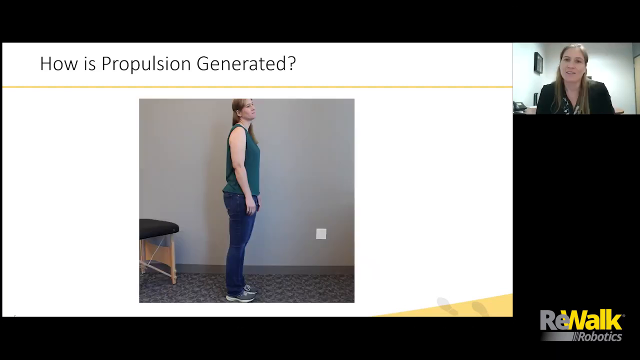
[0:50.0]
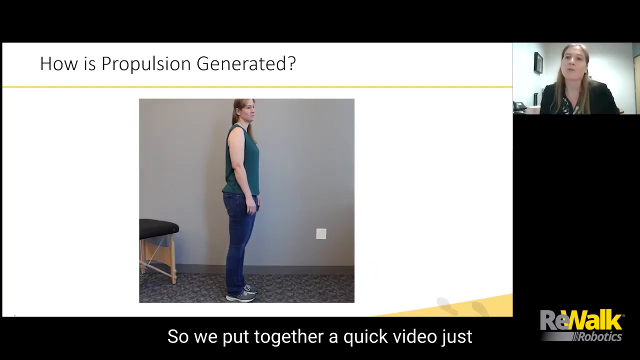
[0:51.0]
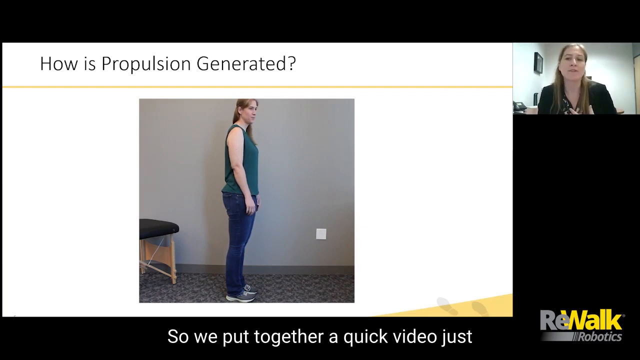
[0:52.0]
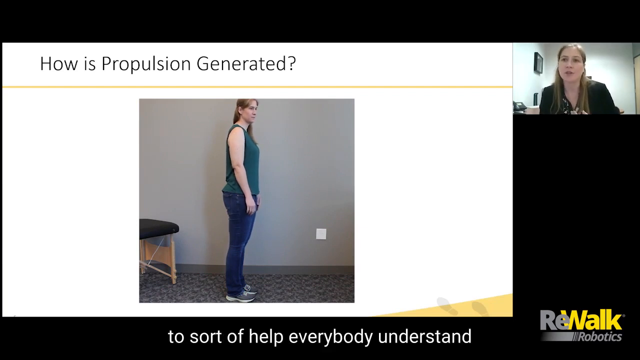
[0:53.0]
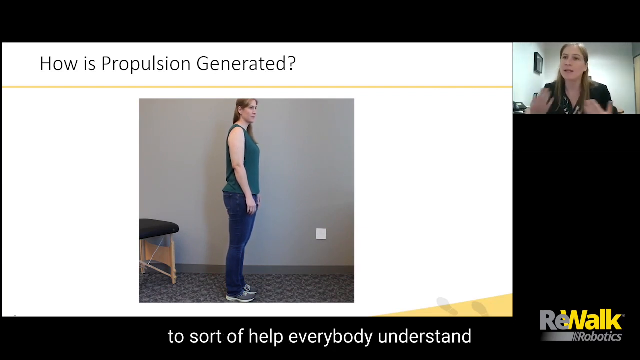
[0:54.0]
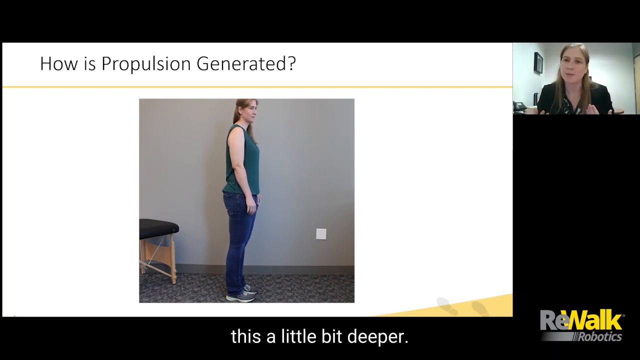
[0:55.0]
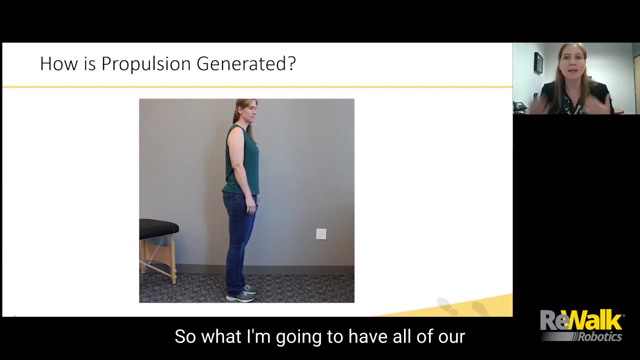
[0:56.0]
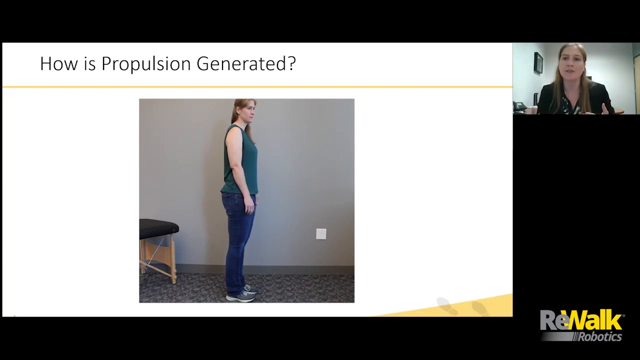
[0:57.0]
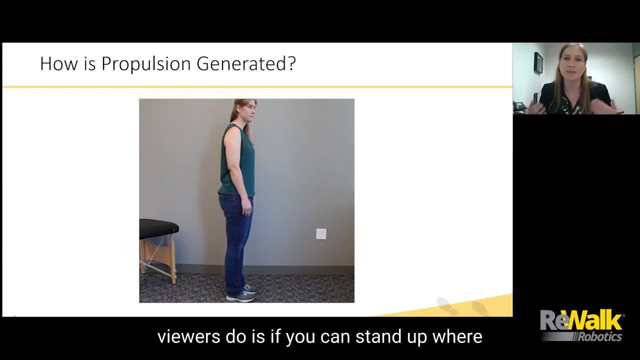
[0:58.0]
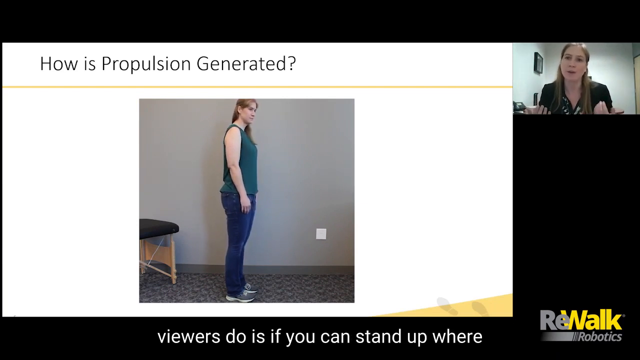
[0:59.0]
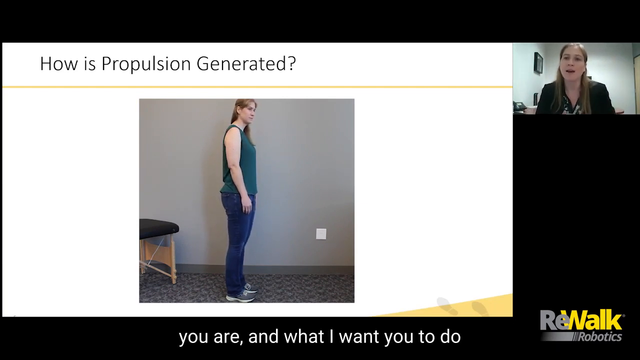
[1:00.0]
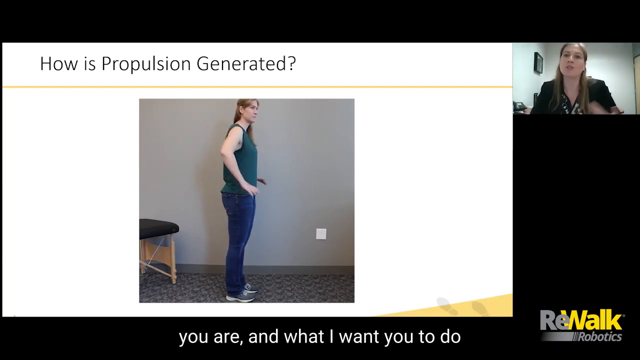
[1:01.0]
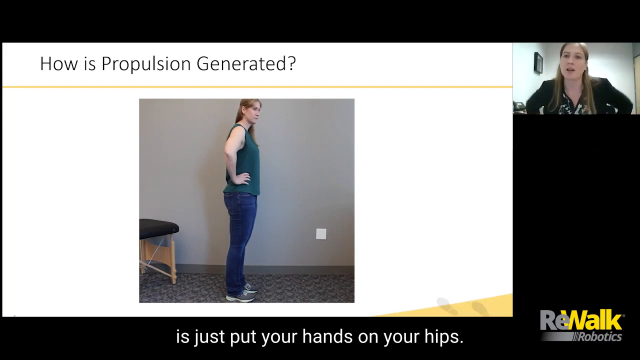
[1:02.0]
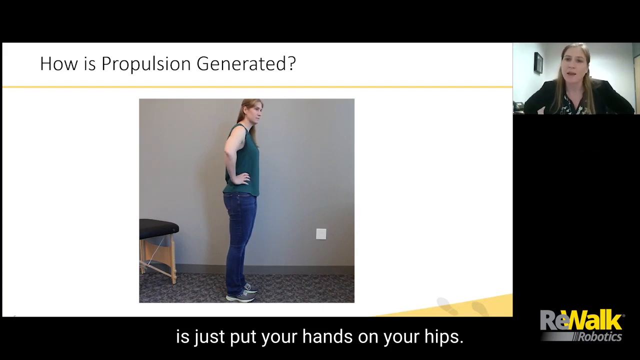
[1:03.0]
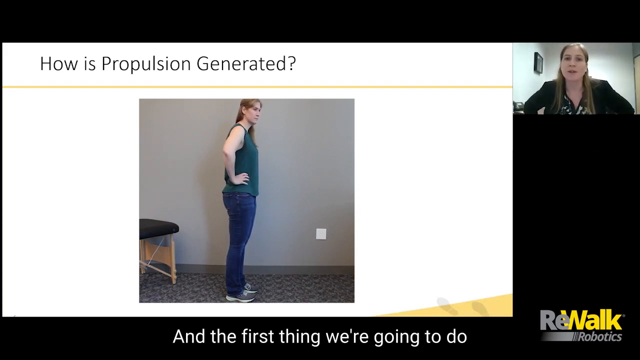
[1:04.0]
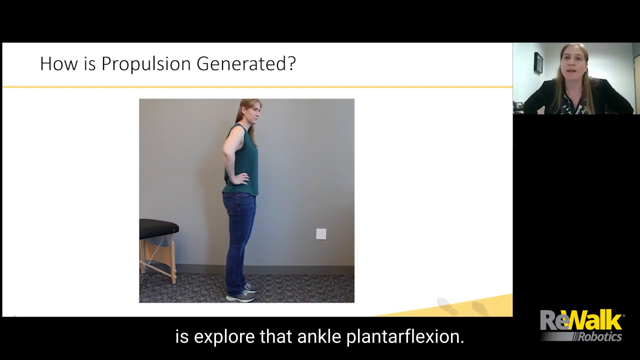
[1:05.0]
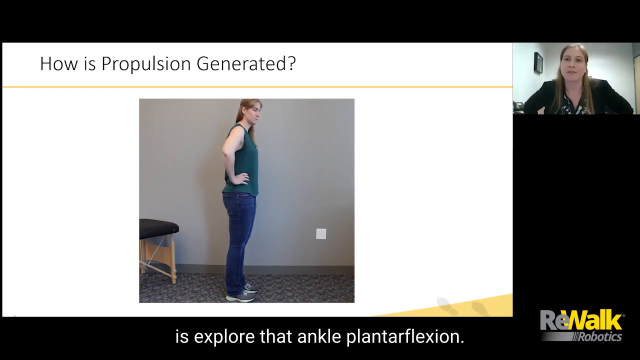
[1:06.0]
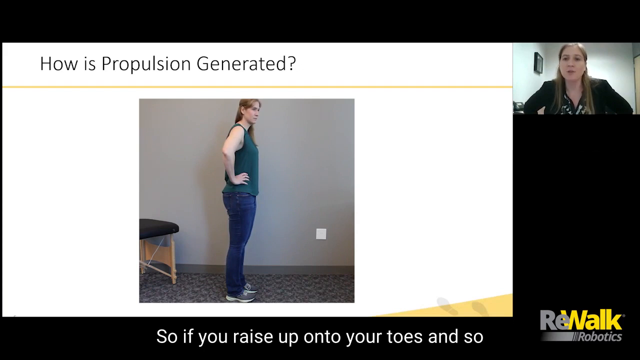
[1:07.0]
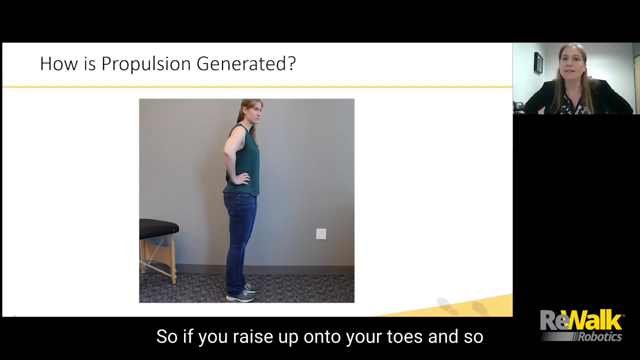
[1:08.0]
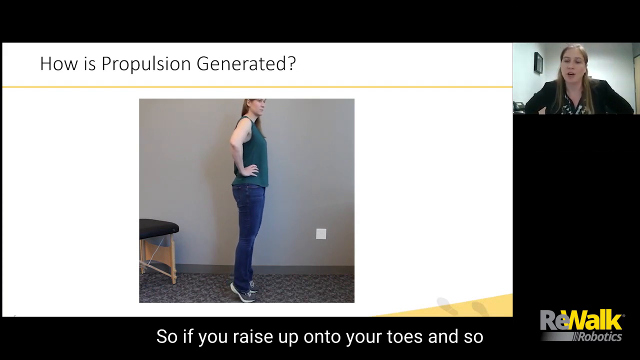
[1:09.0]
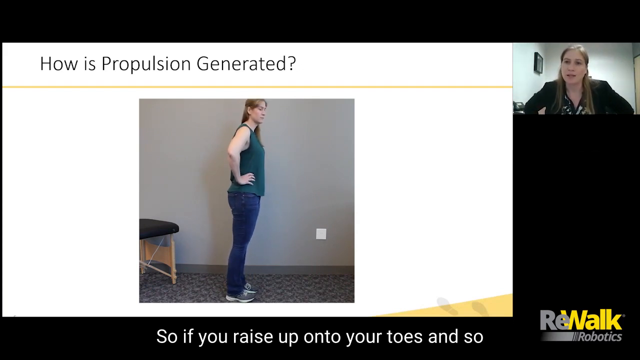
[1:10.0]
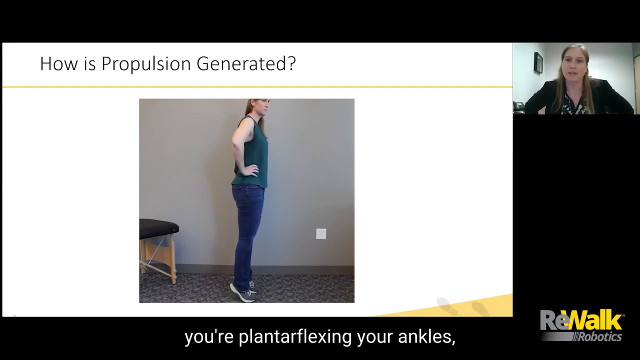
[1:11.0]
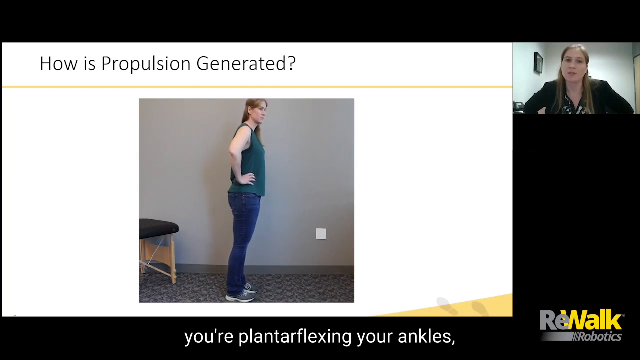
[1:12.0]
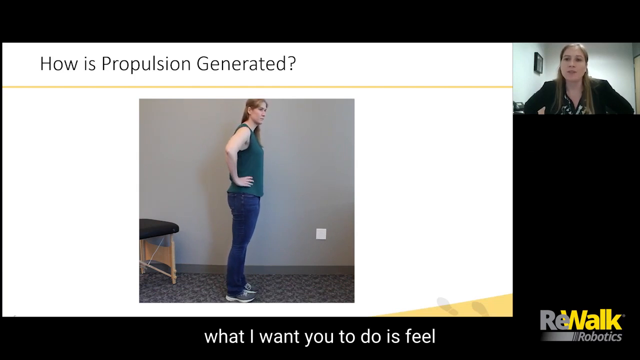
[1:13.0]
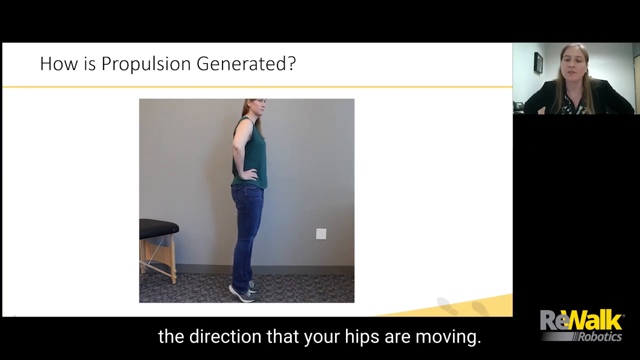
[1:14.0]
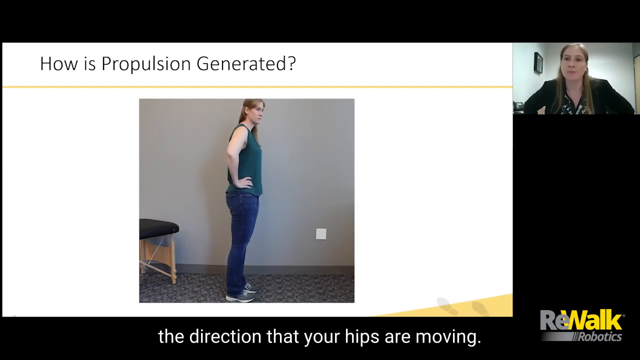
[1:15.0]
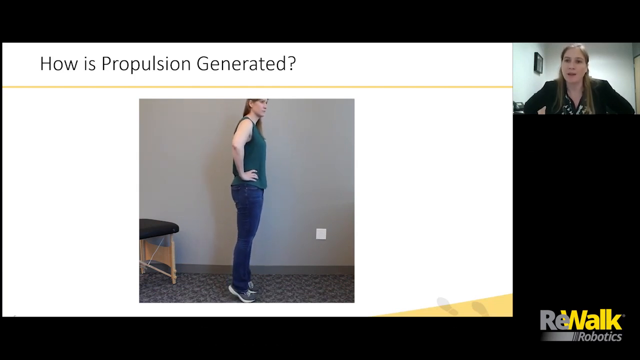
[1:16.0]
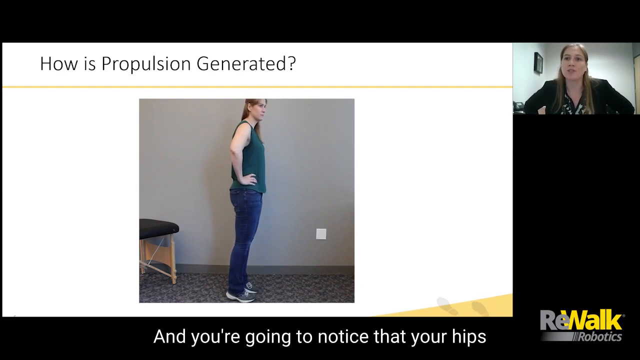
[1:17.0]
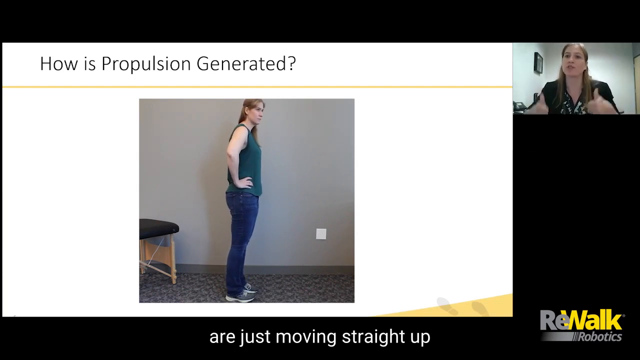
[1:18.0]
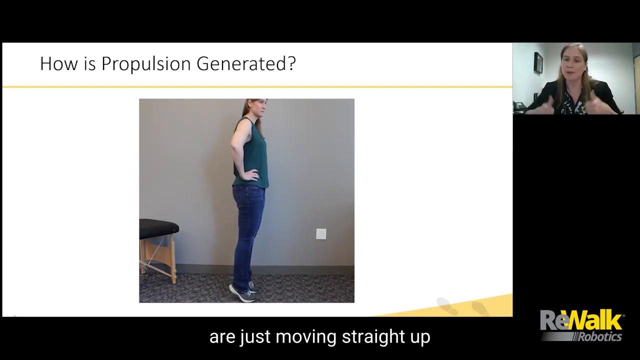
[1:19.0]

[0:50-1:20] A woman stands in a room with a gray wall, with a chair on the left. She wears jeans and a turquoise T-shirt and is probably the same woman who appears in the top right of the video. The presentation is by Rewalk Robotics, titled "How is propulsion generated?" The woman in the center puts her hands on her hips and rises straight up.